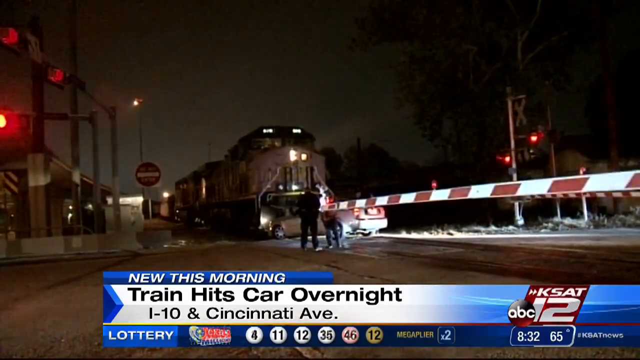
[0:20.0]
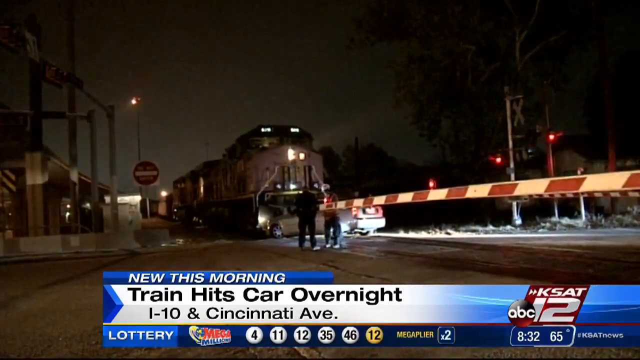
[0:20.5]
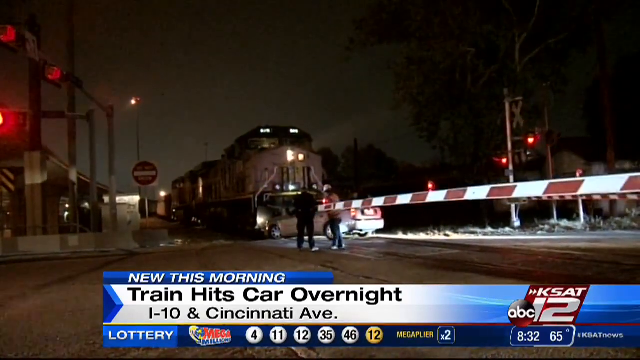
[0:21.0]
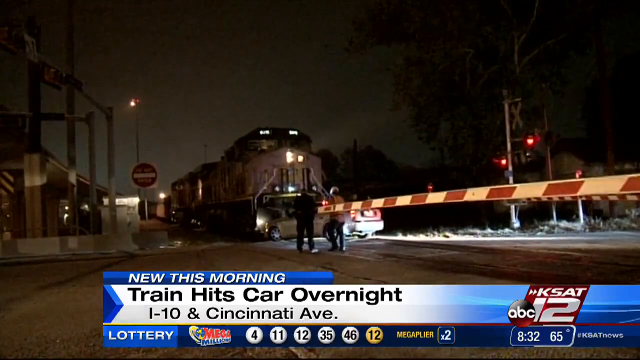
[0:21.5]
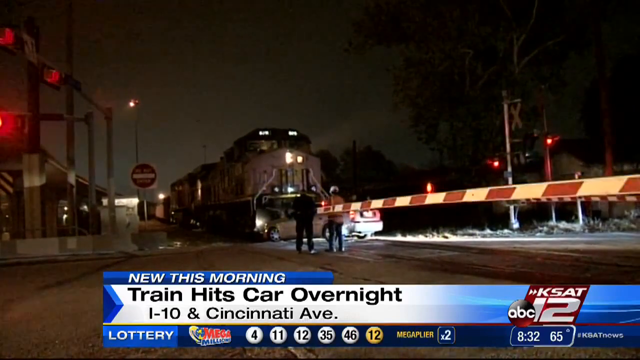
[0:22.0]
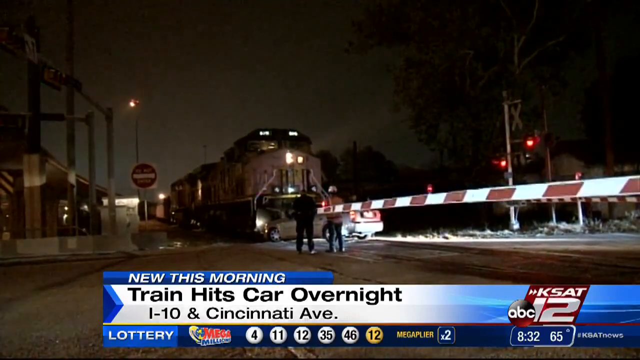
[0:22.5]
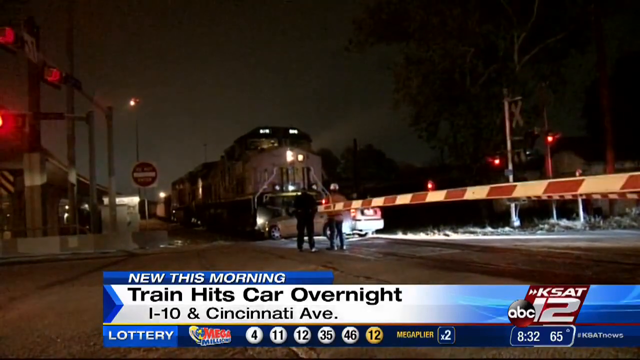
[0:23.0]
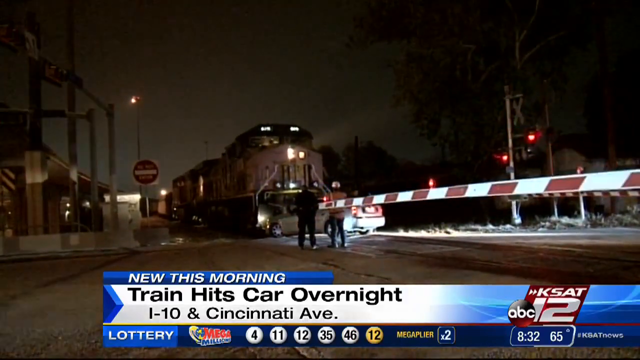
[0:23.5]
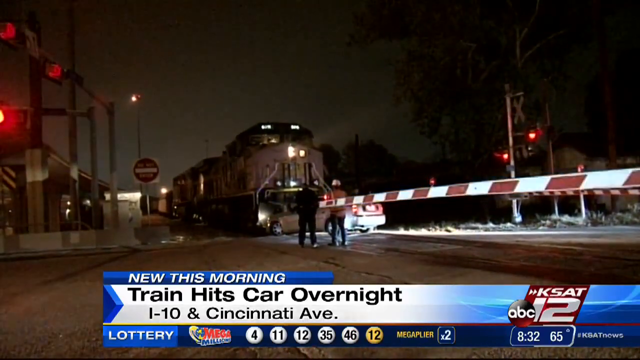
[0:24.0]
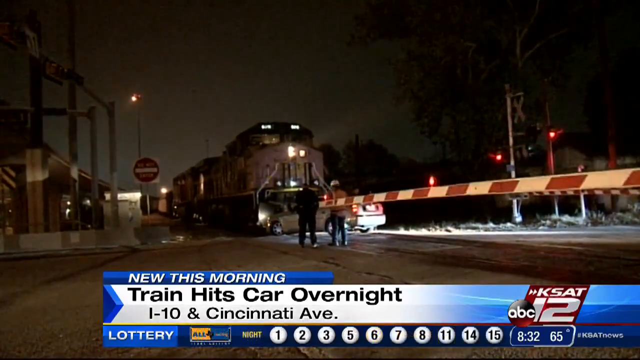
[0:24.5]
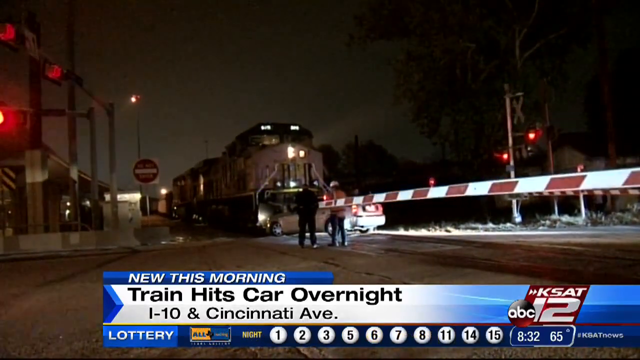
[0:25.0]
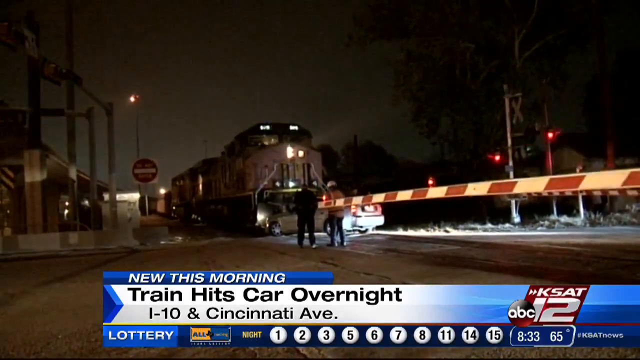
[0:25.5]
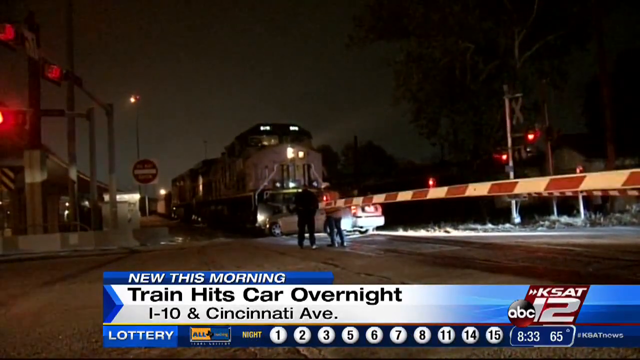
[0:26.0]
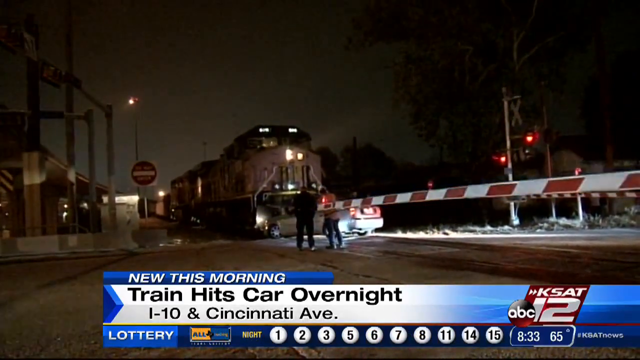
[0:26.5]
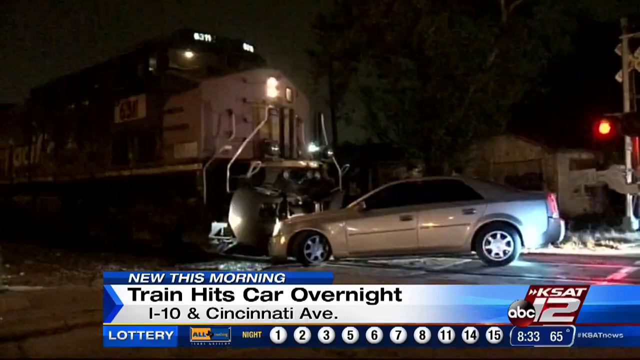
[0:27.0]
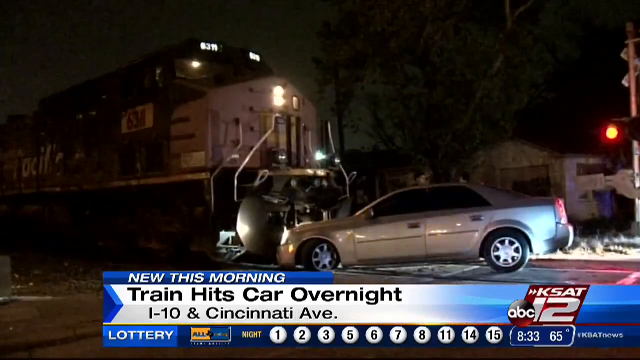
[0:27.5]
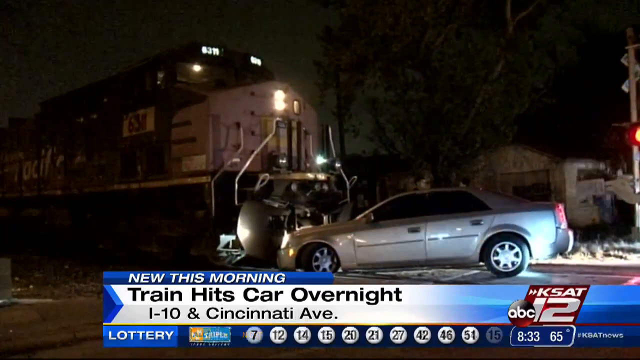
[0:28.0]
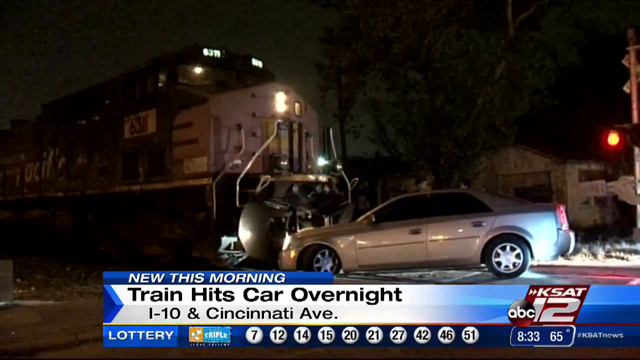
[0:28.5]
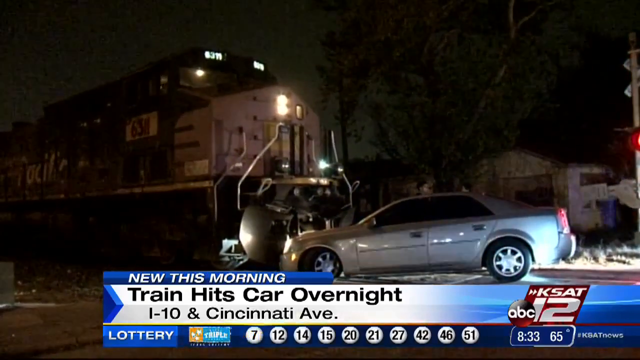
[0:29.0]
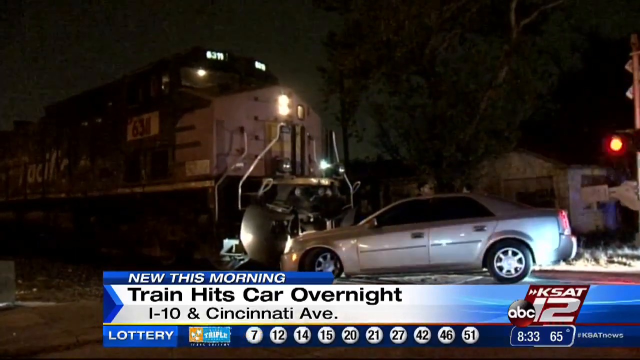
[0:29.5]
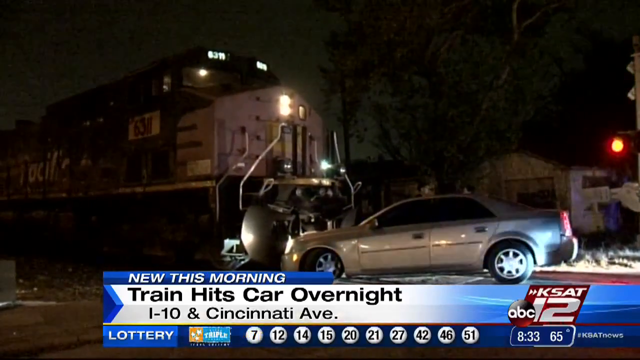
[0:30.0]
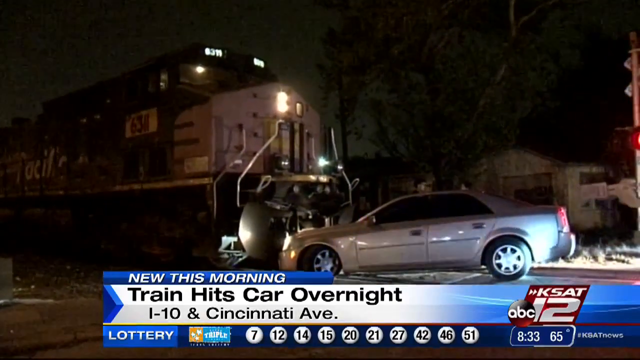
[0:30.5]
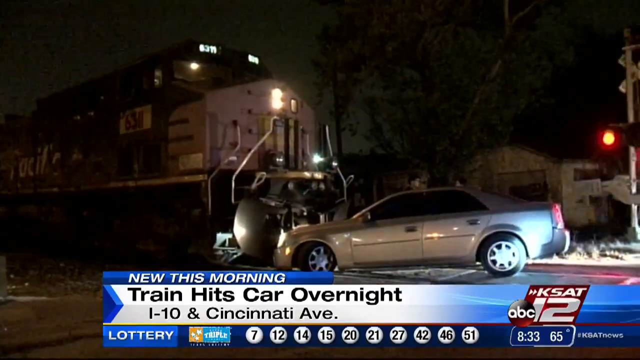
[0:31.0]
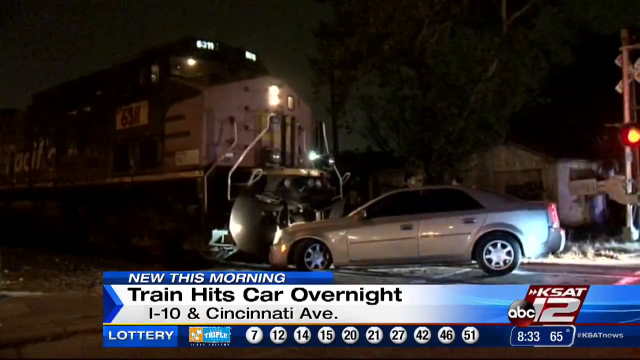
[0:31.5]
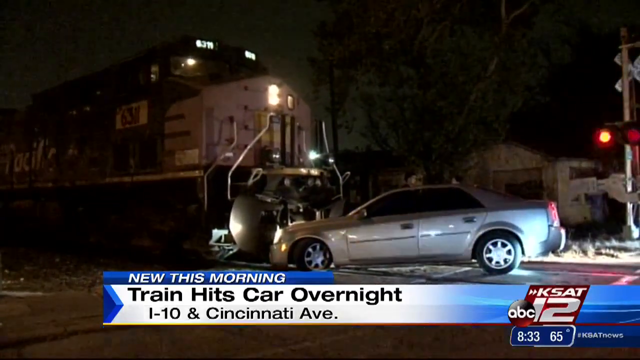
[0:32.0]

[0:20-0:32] At the bottom of the screen, the banner says "new this morning, train hits car overnight, I-10 and Cincinnati Avenue." The broadcast is from channel ABC 12. Along the bottom of the banner, lottery numbers are changing, and the time and temperature are also shown. Different shots show the train, the car, and the people around them, along with the blinking railroad light. The car is a four-door car that looks white or a very light silver color.